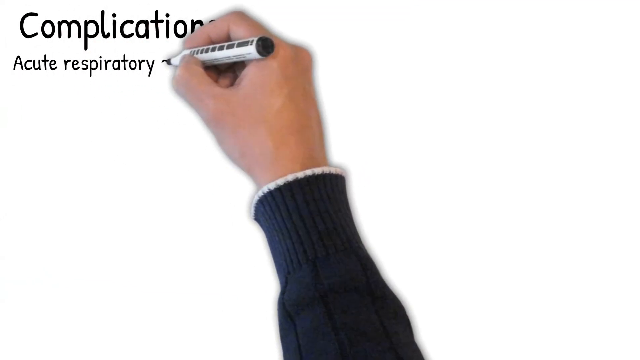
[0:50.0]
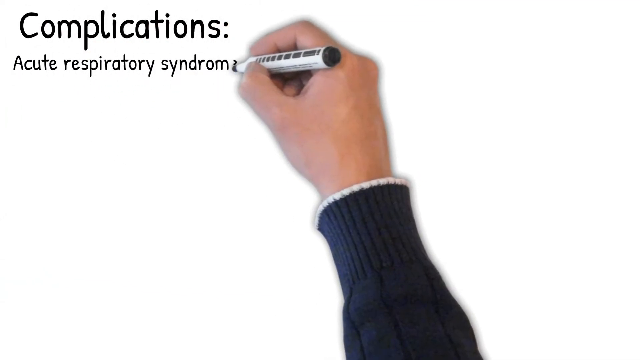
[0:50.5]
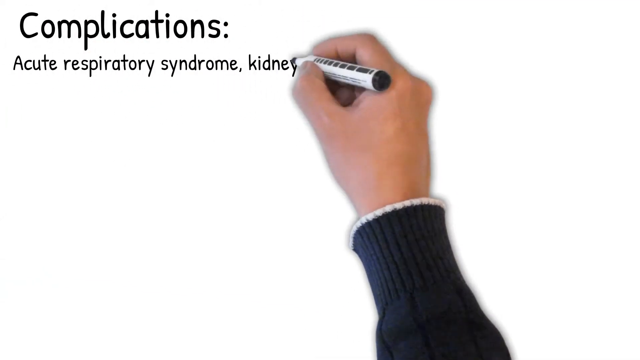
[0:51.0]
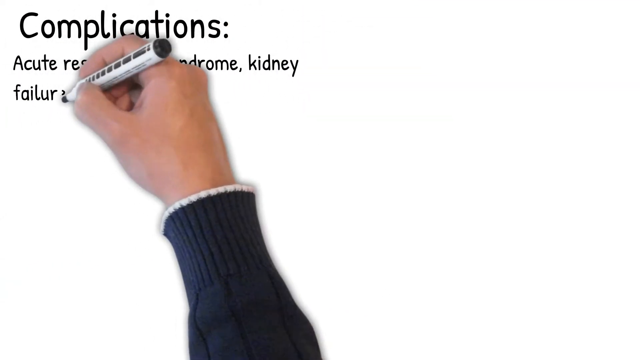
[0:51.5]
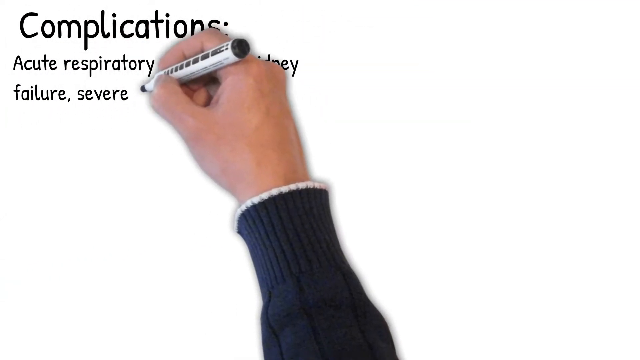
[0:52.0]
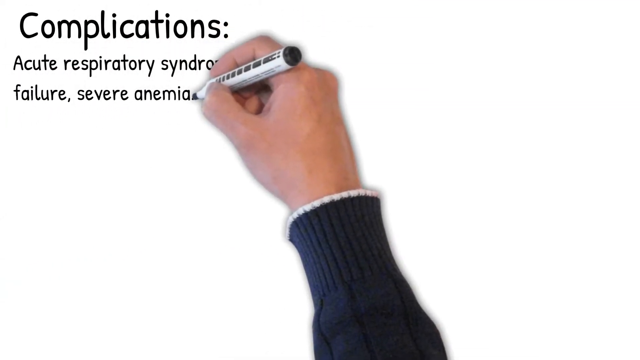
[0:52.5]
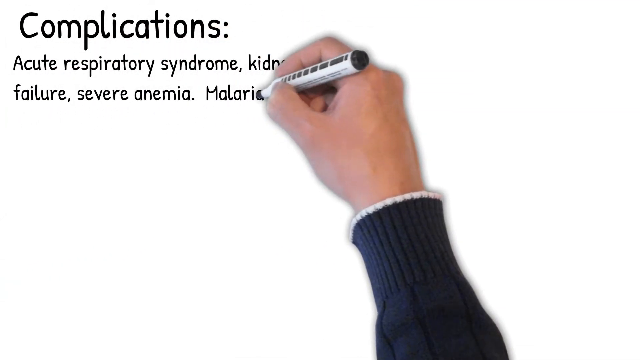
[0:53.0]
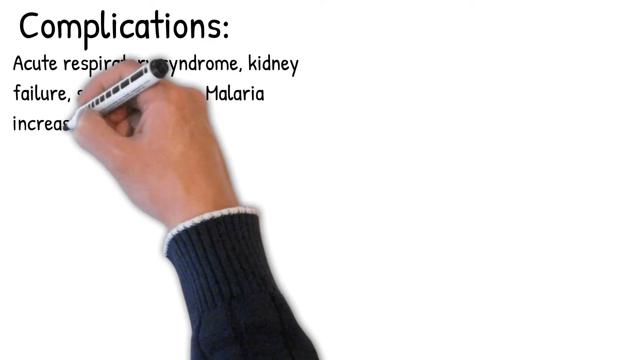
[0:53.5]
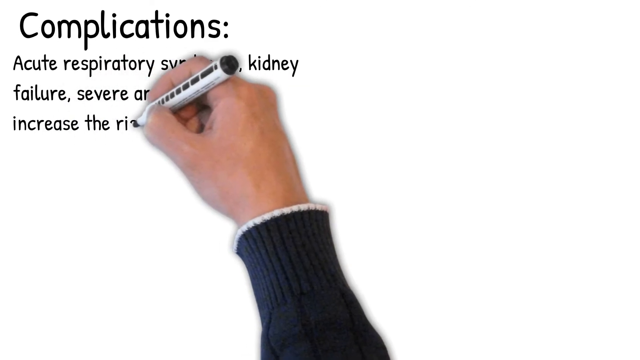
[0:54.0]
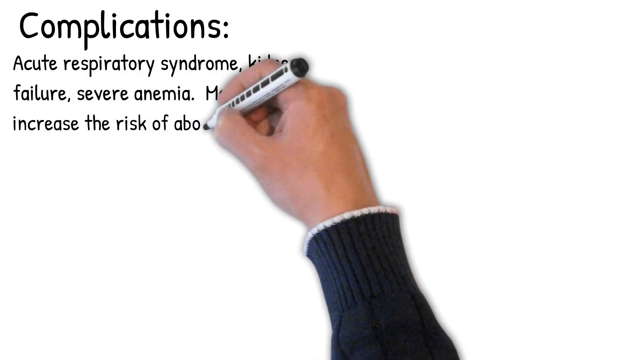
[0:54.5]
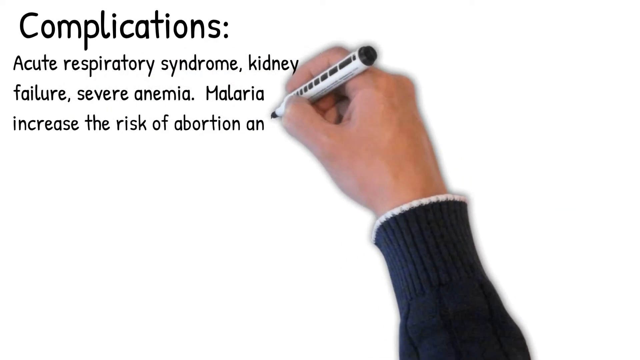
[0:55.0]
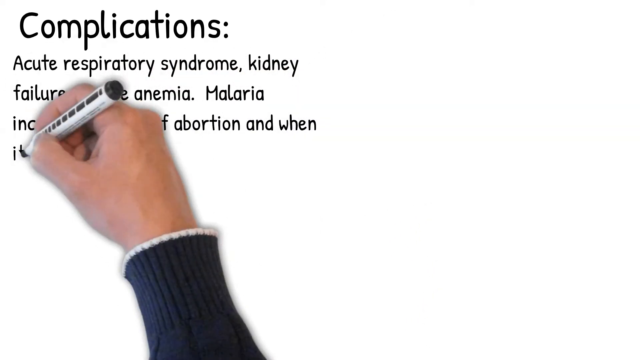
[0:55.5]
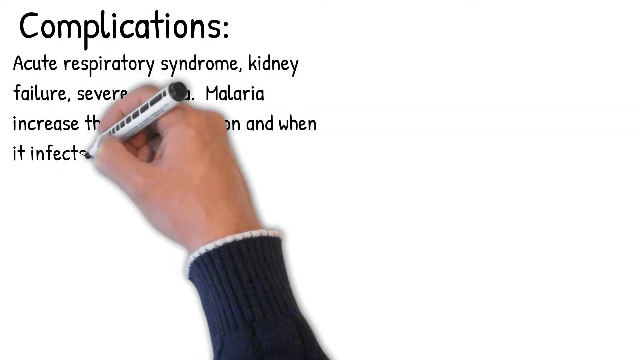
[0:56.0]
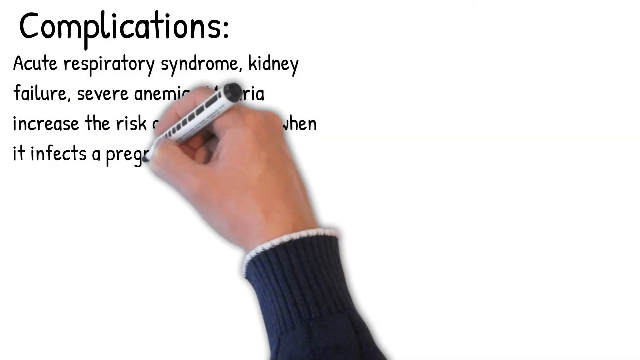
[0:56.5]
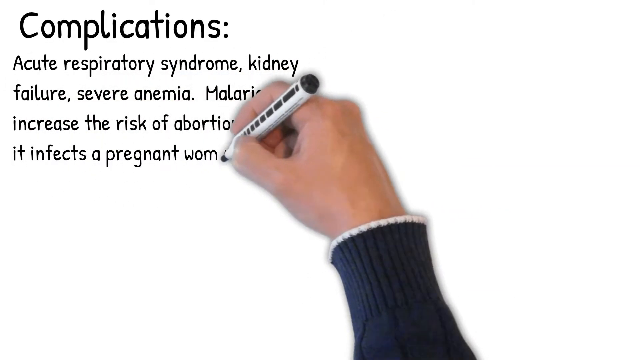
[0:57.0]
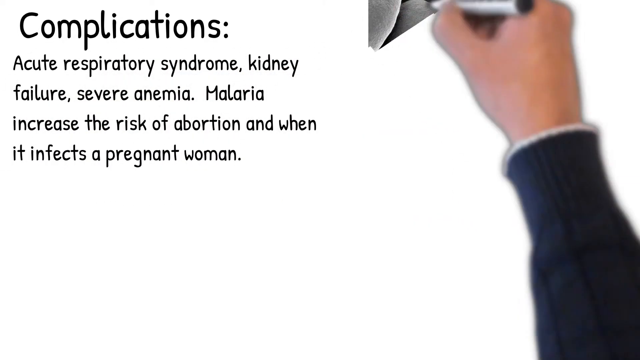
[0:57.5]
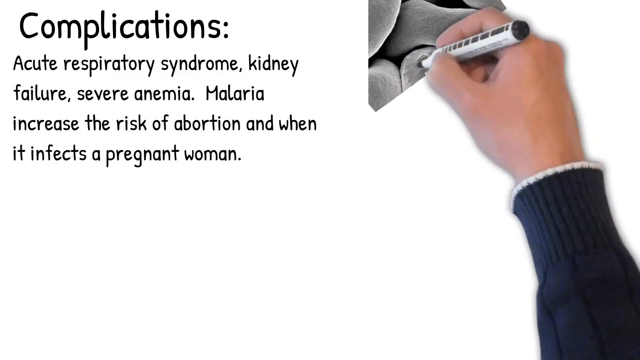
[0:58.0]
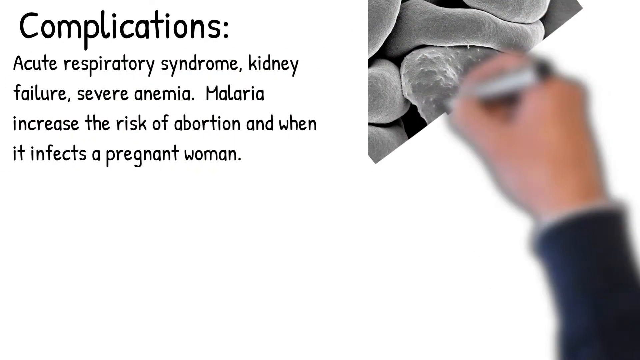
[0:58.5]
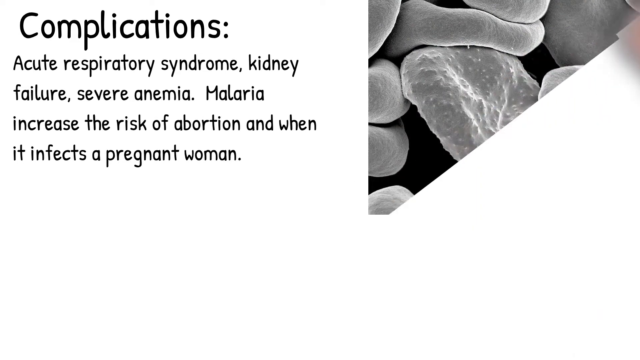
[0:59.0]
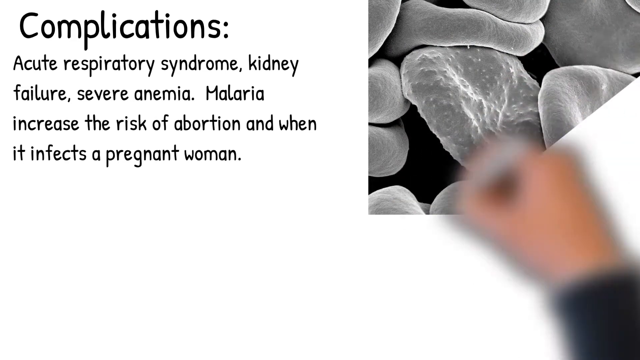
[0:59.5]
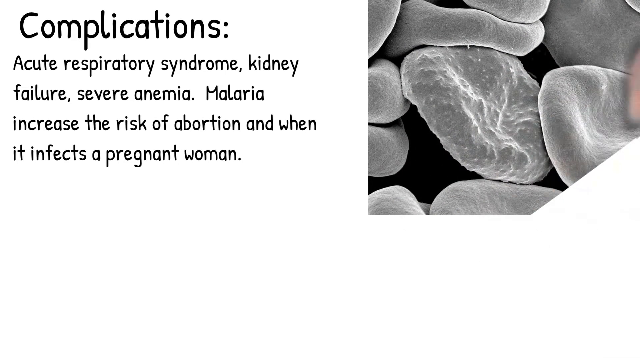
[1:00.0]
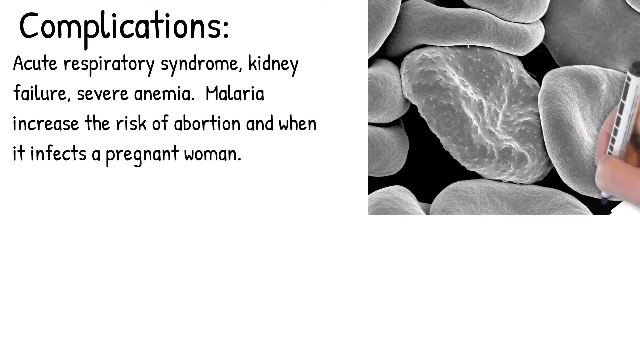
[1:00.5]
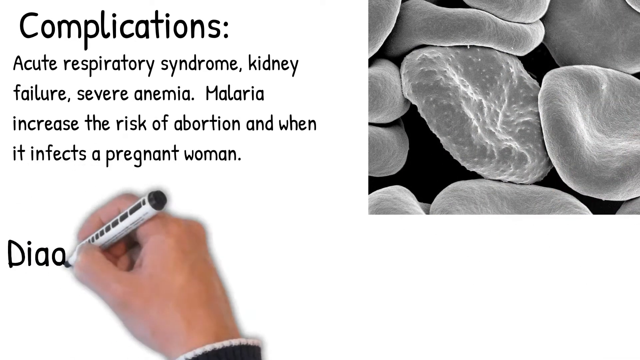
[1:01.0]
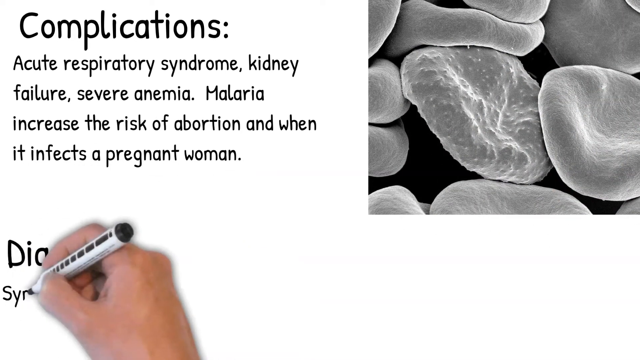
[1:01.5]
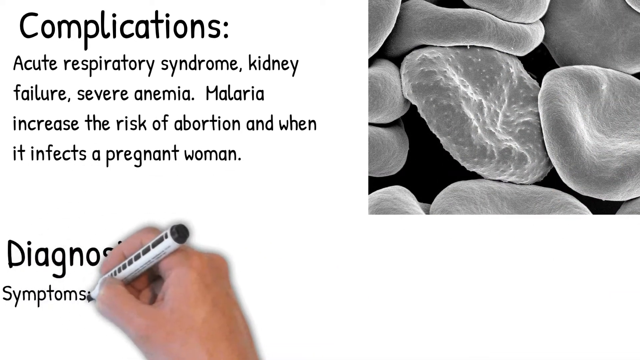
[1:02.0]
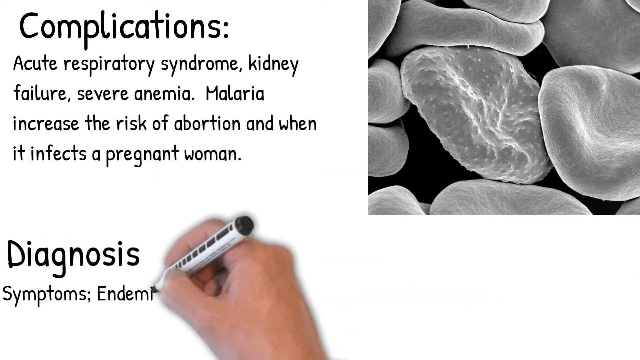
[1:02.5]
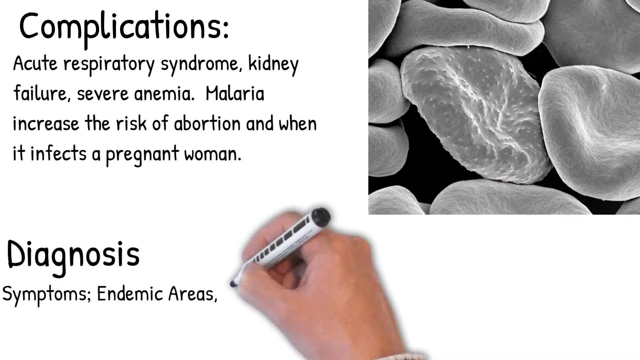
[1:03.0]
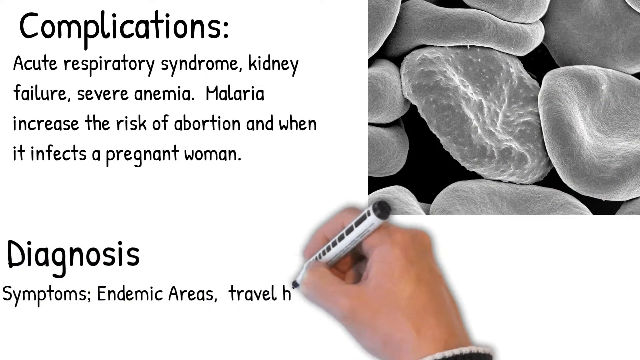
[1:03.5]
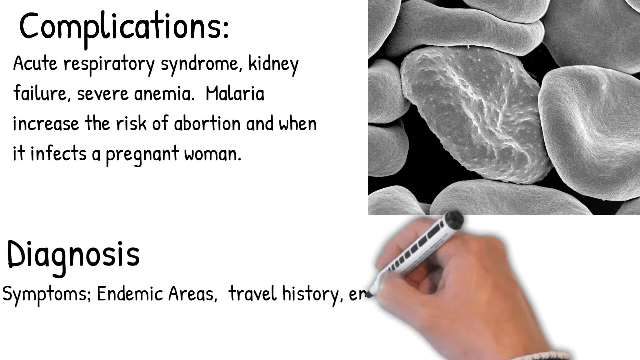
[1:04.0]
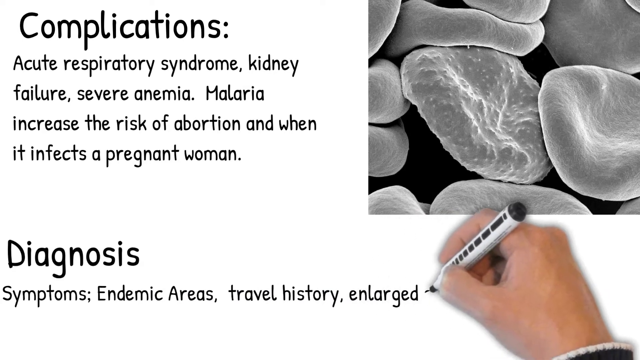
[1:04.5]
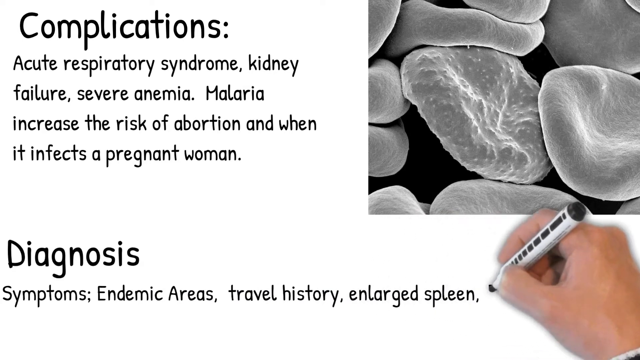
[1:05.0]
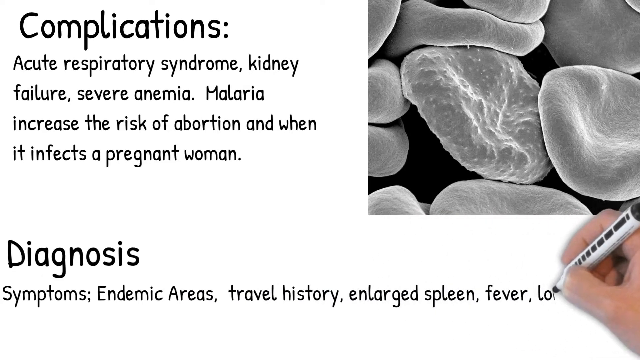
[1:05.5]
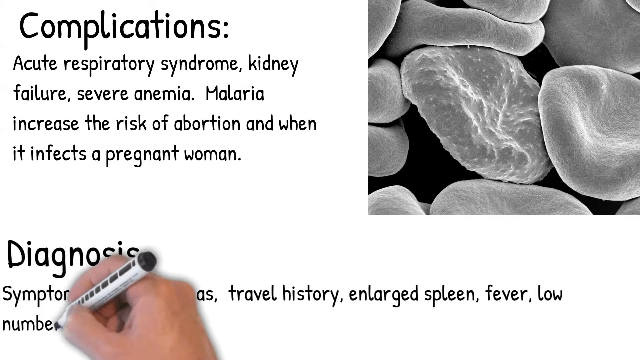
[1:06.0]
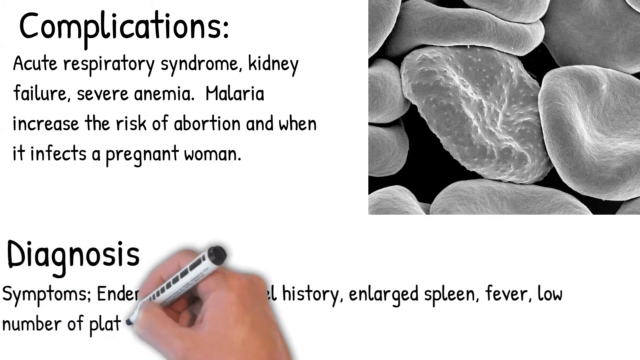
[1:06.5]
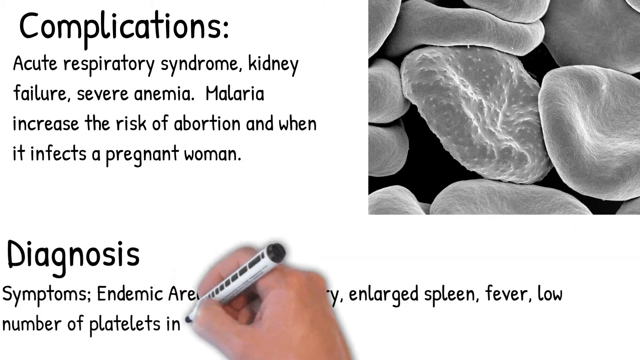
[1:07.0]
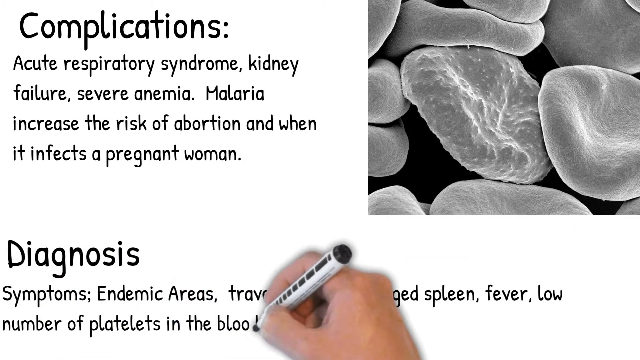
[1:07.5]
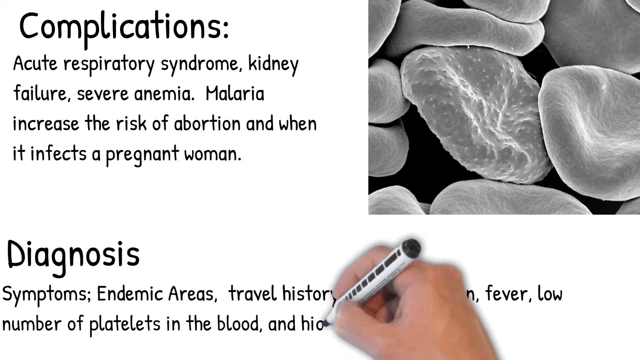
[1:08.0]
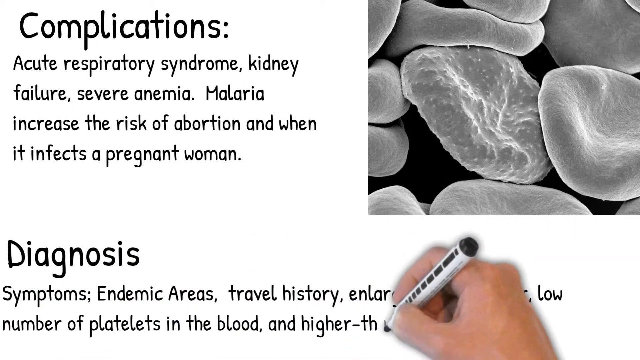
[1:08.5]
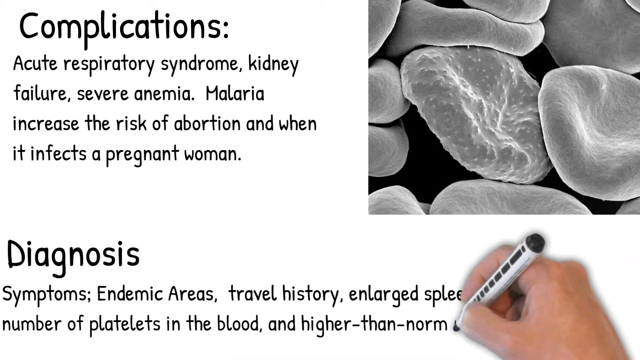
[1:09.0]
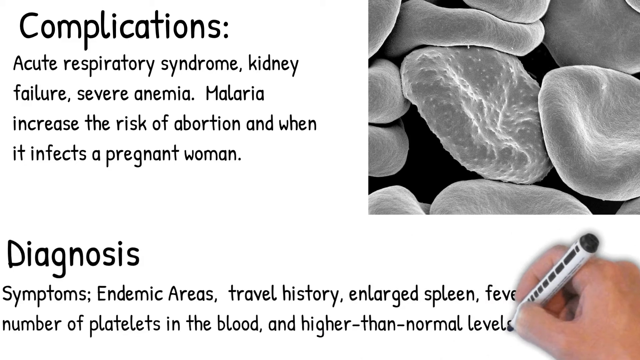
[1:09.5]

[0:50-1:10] The background is plain white, in the style of a whiteboard. A hand wearing a long-sleeve jumper is animated to look as though it is writing on the whiteboard. Text on the left reads "complications: acute respiratory syndrome, kidney failure, severe anemia, malaria increase, the risk of abortion, and when it infects a pregnant woman", written with those errors. On the left there is now a black and white photograph, rather than an animation, of what looks like blood cells. At the bottom of the screen the hand moves as if writing more text, which reads "diagnosis: symptoms, endemic areas, travel history, enlarged spleen, fever, low number of platelets the number of platelets in the blood and higher than normal levels of", with the text continuing beyond that.